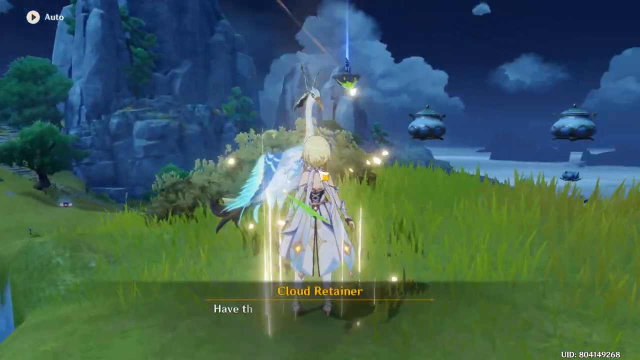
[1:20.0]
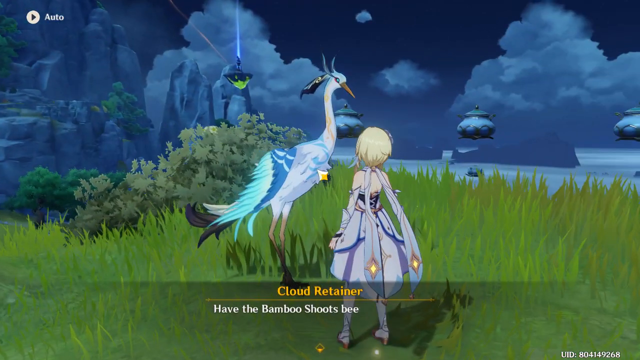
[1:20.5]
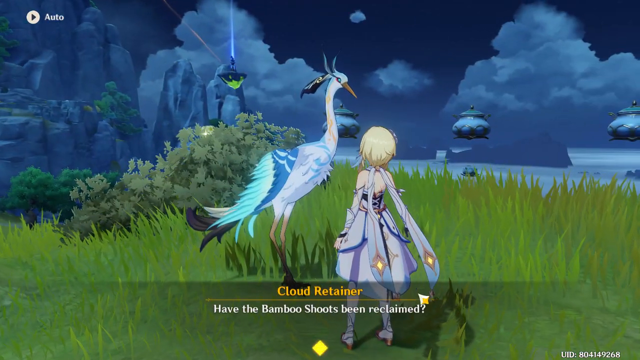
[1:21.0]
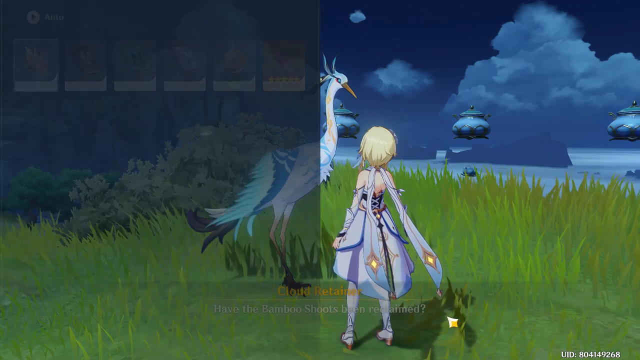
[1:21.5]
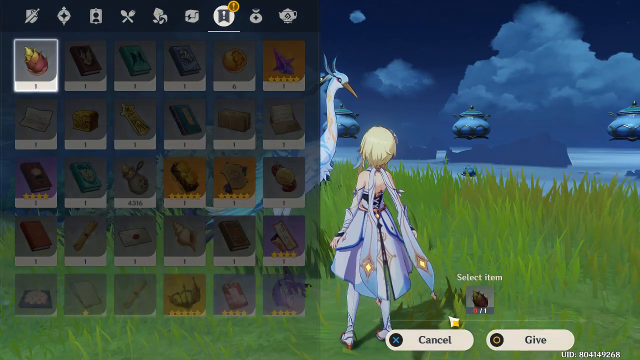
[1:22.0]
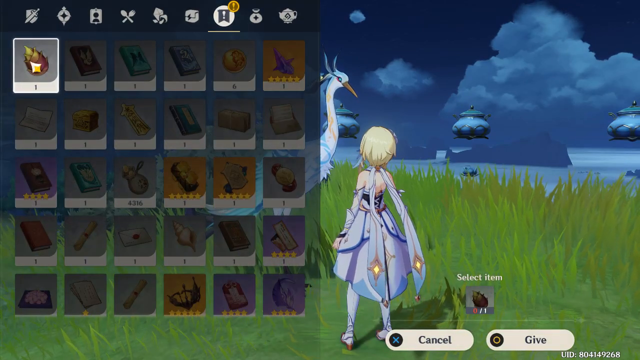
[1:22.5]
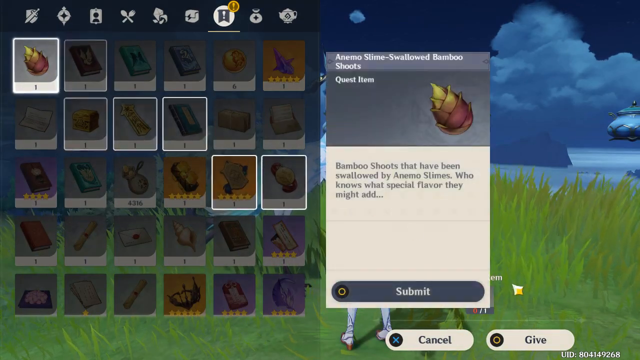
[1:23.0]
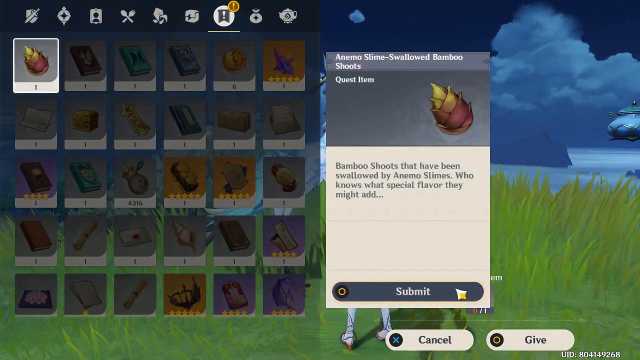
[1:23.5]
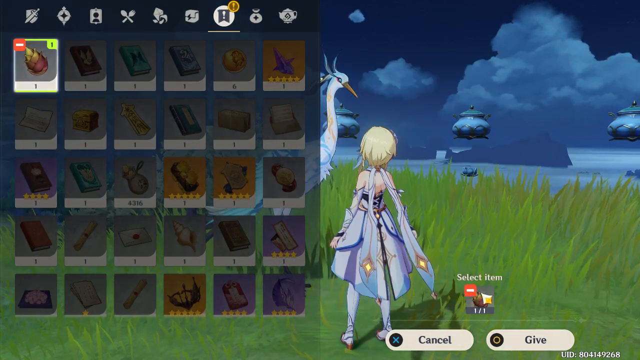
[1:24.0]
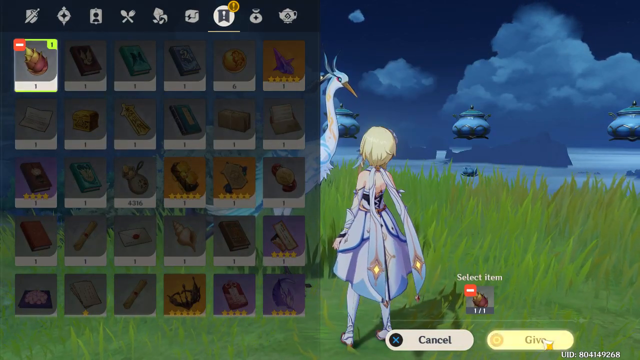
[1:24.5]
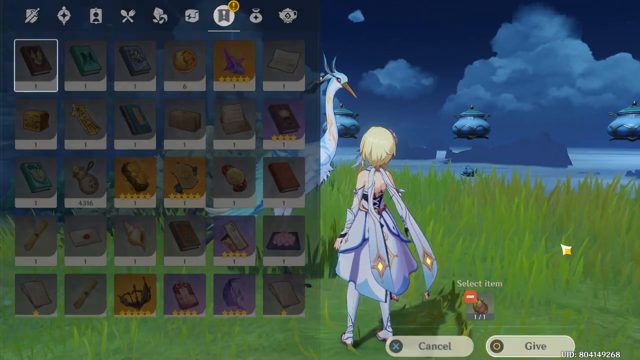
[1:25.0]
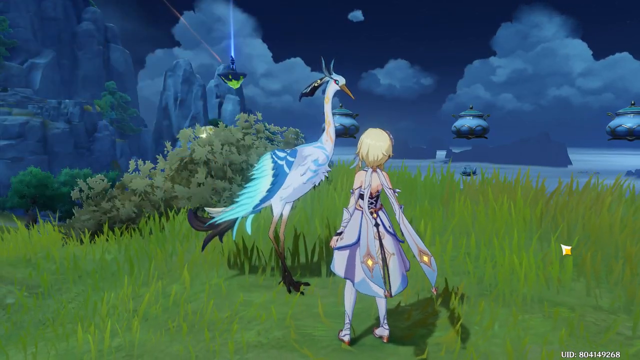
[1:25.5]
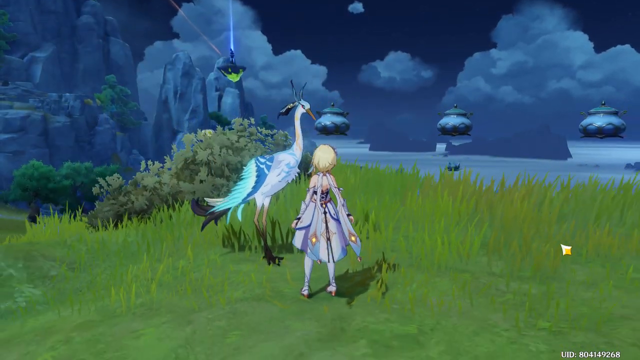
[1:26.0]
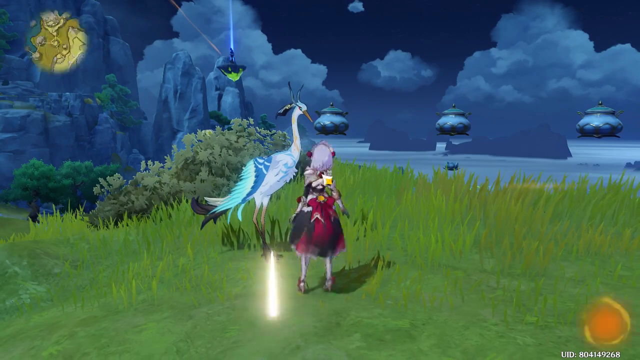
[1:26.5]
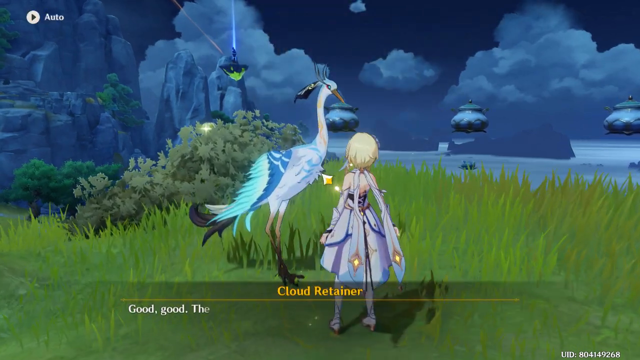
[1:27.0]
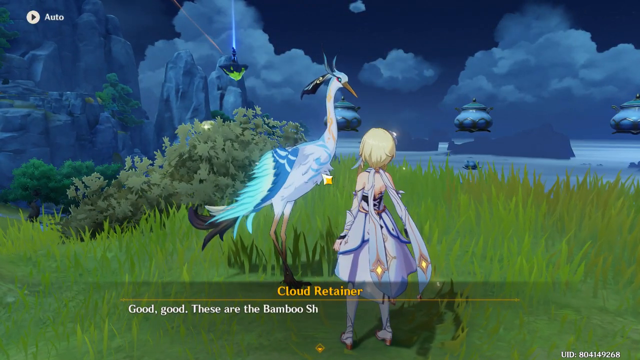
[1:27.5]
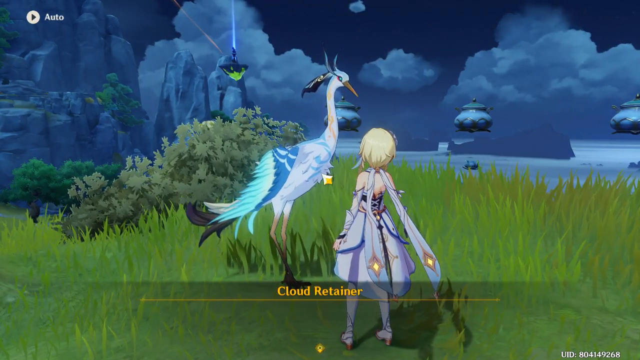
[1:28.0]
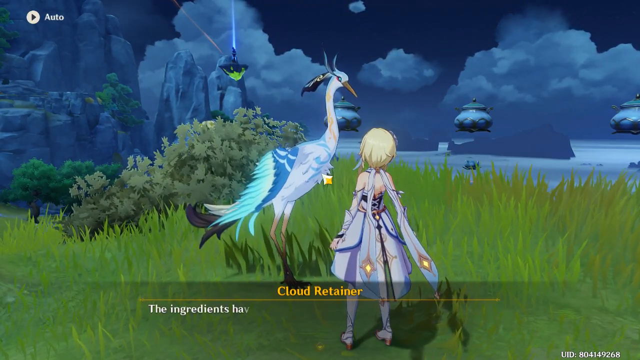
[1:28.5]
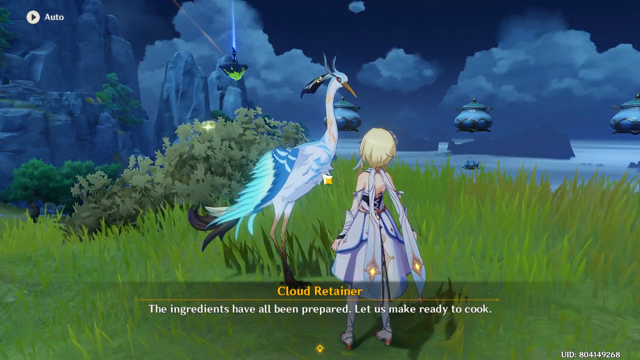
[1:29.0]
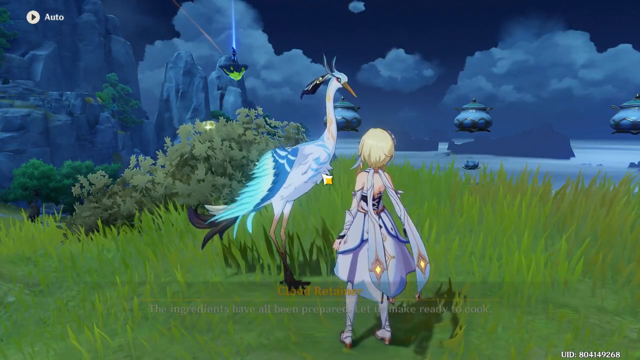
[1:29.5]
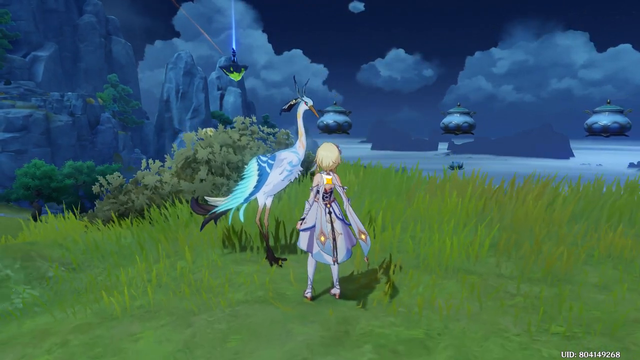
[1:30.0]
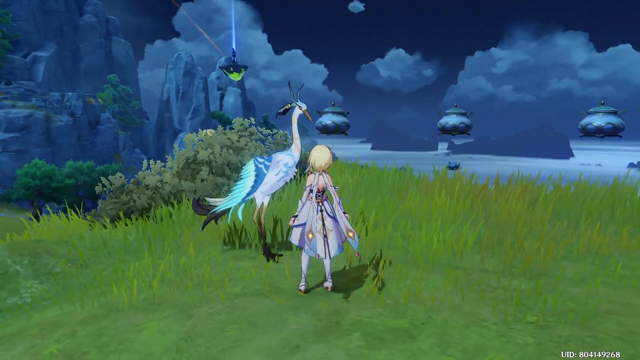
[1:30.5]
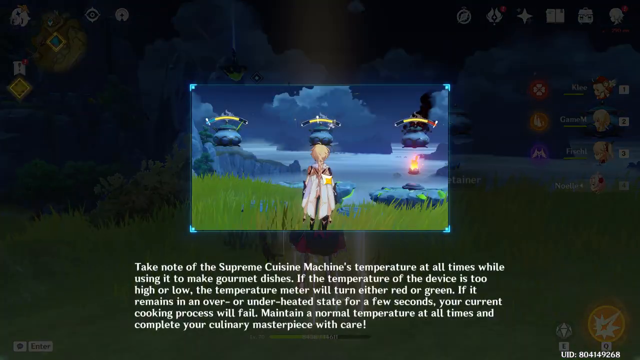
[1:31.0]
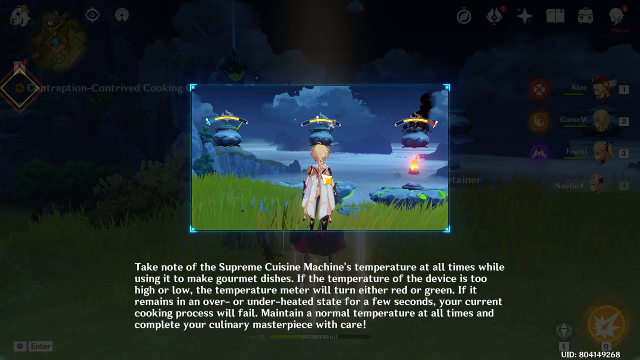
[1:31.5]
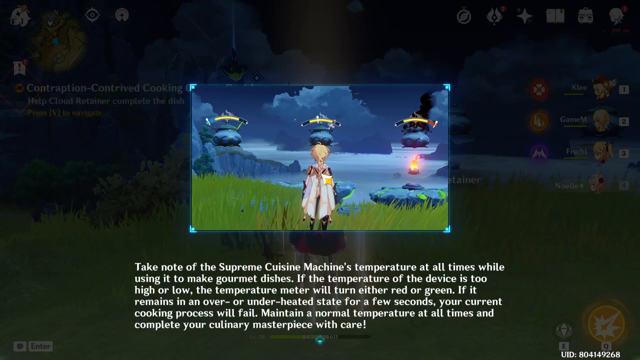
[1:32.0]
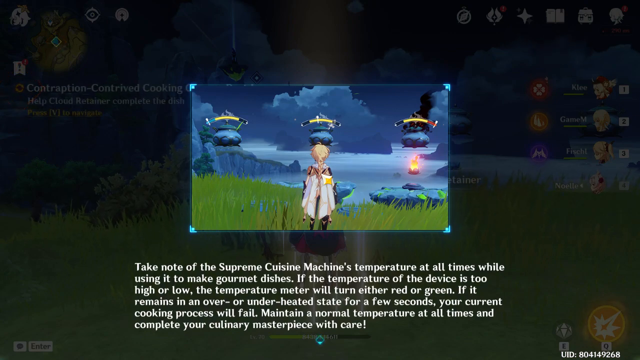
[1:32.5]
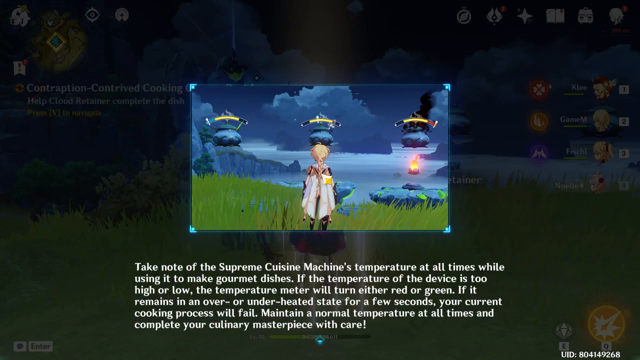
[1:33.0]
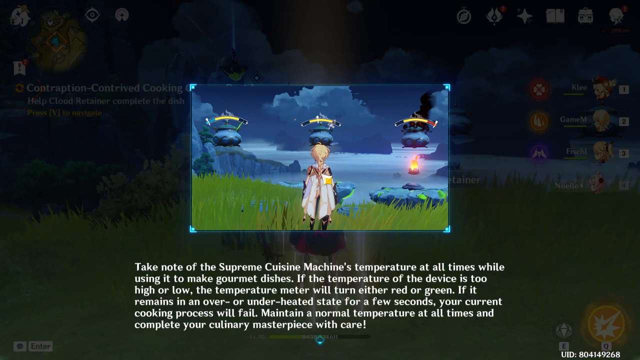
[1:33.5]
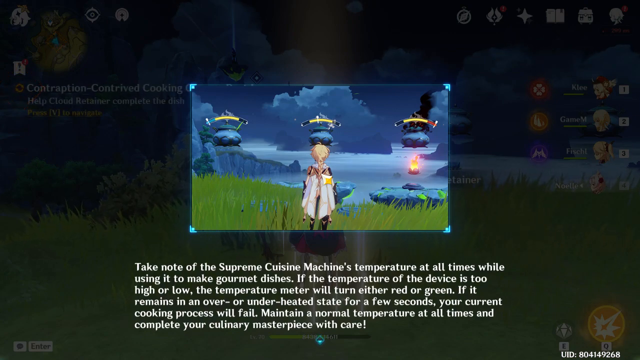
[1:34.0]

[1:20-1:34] The girl flies toward the stone structure, back to where she was at the beginning with the crane, which is called the cloud retainer. The cloud retainer asks her whether she received the bamboo shoots from the amino slimes. She goes through her inventory, takes out the bamboo shoots she got from the amino slimes and gives them to him. Her outfit has changed at this point: instead of the black and red outfit with bat-like wings, she now has straight fairy-like wings and a kind of silvery blue outfit, still with a long skirt, and she no longer wears the earmuffs. The crane is bigger than her, with feathers going up and down from his eyes. He says, "okay, good, good. These bamboo shoots are the ones that Gam promised," and that the ingredients have all been prepared. Text then tells the player to take note of the Supreme Cuisine's machine temperature at all times while using it to make gourmet dishes: "If the temperature of the device is too high or low, the temperature meter will either turn red or green. If it remains in an over or under heated state for a few seconds, your current cooking process will fail. Maintain a normal temperature at all times and complete your culinary masterpiece with care."